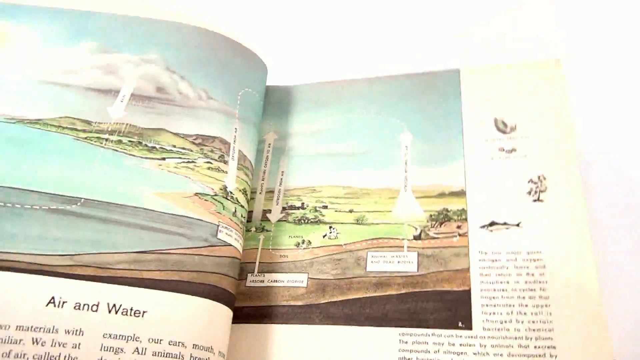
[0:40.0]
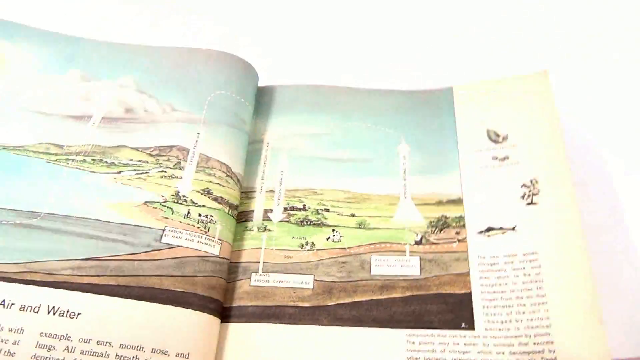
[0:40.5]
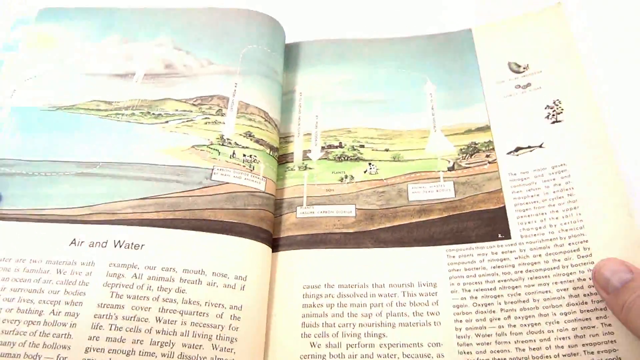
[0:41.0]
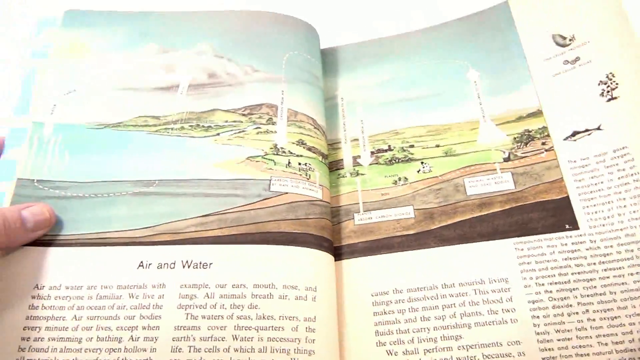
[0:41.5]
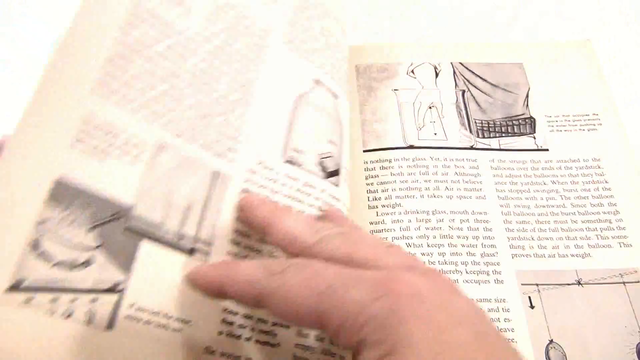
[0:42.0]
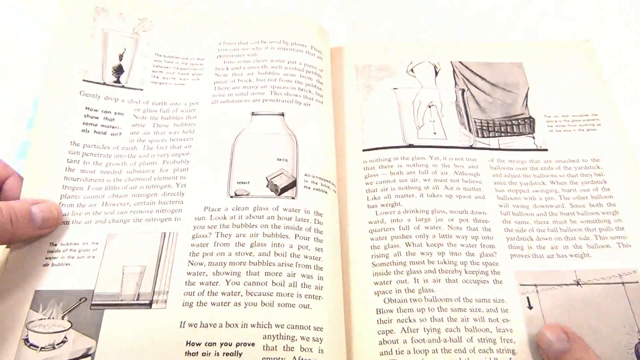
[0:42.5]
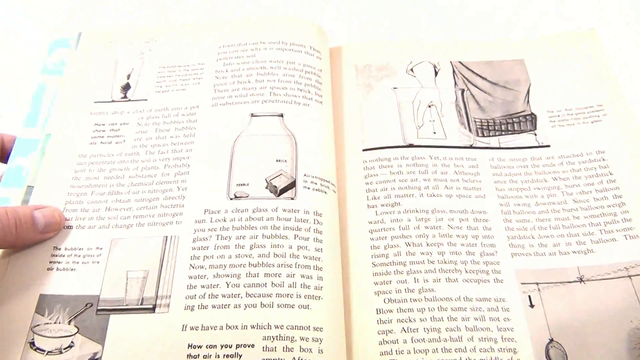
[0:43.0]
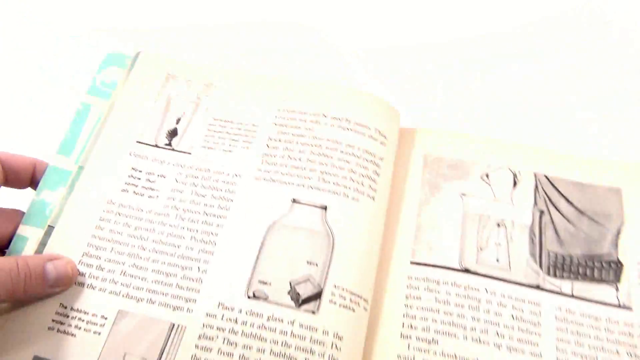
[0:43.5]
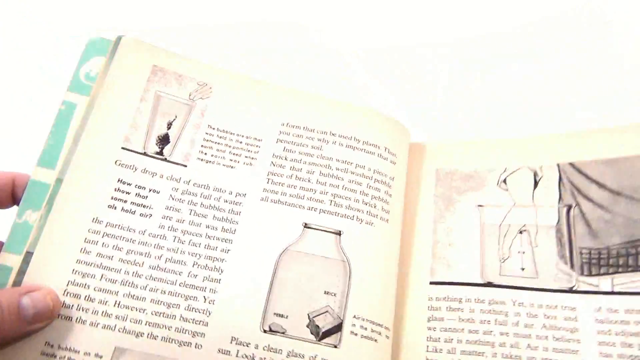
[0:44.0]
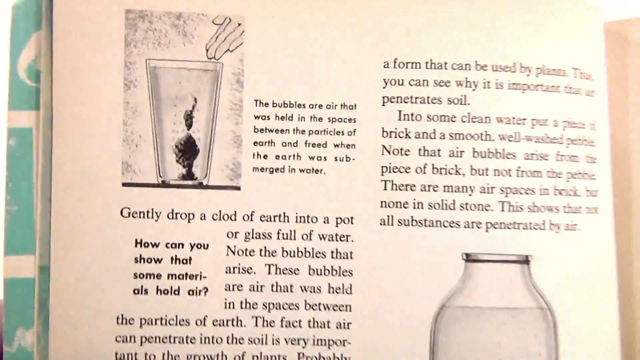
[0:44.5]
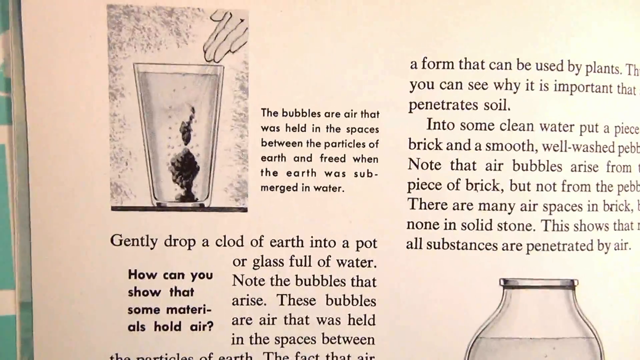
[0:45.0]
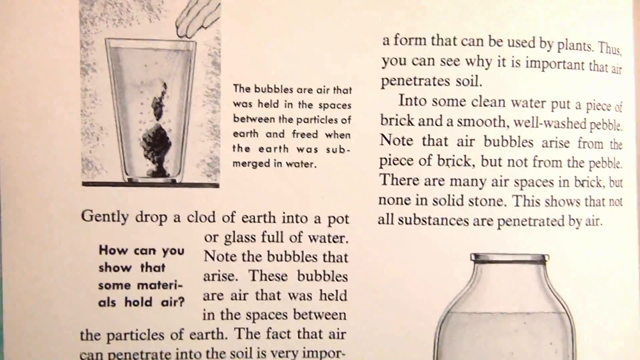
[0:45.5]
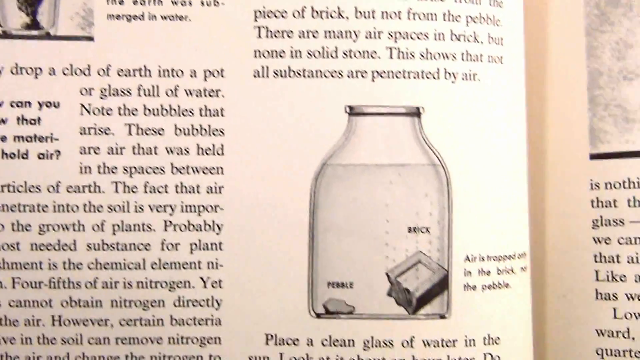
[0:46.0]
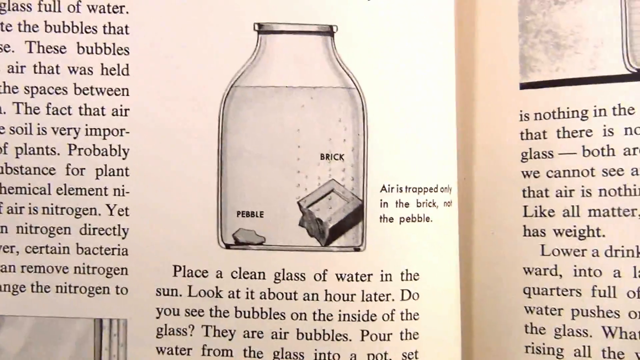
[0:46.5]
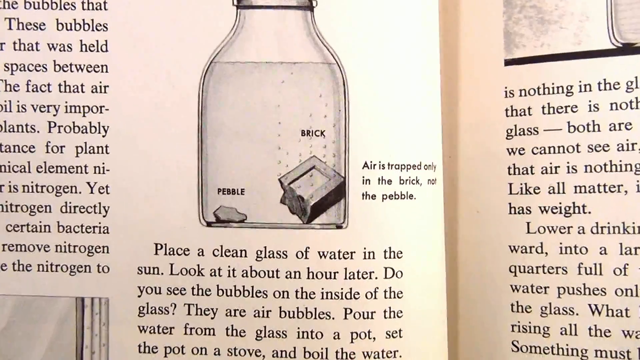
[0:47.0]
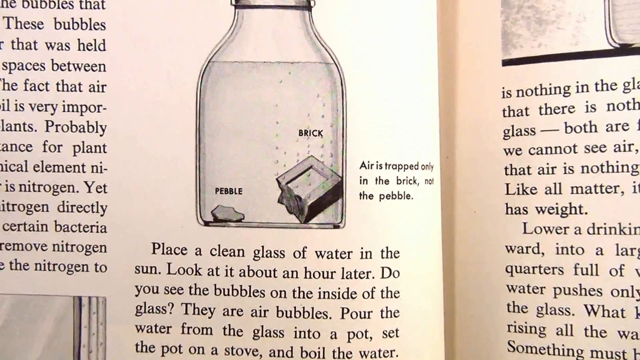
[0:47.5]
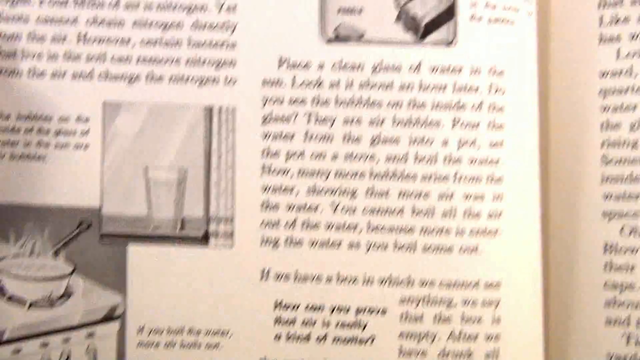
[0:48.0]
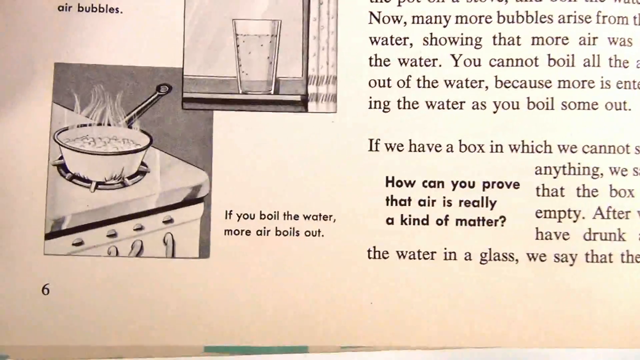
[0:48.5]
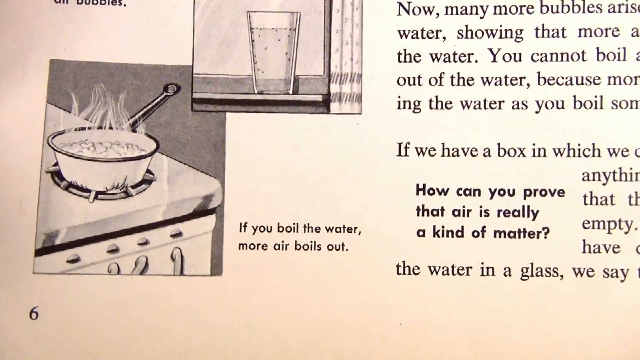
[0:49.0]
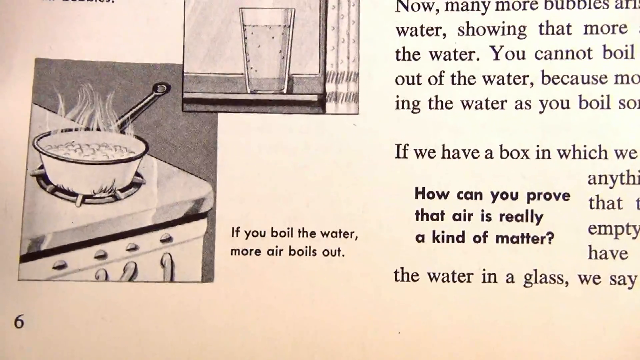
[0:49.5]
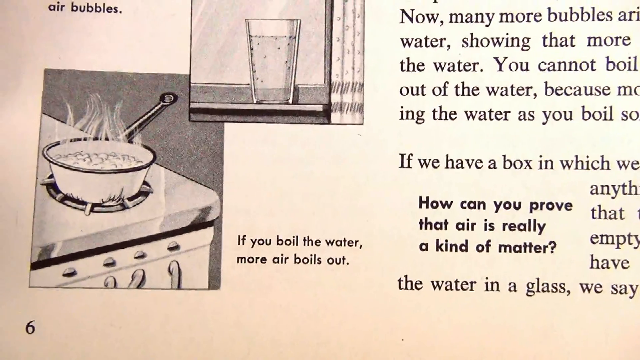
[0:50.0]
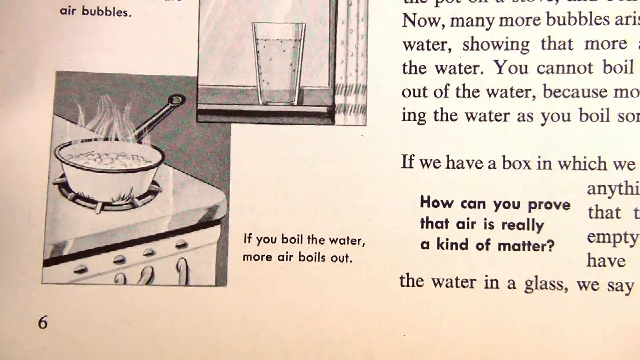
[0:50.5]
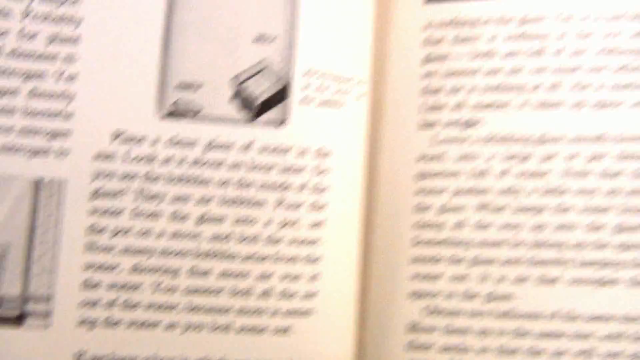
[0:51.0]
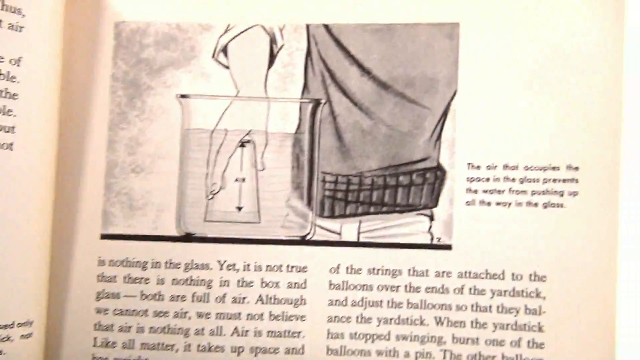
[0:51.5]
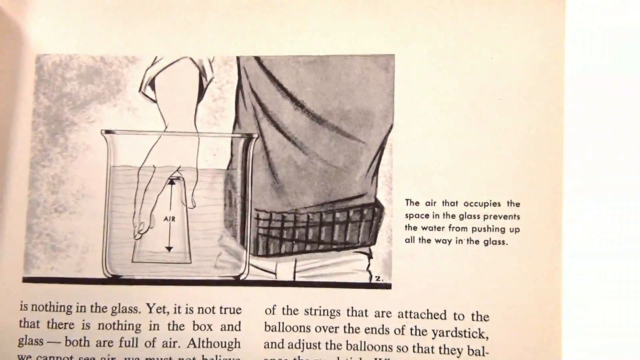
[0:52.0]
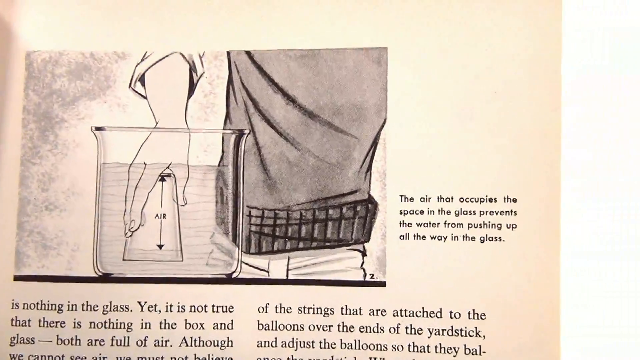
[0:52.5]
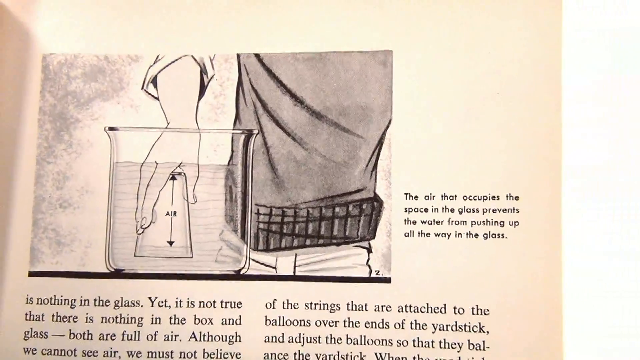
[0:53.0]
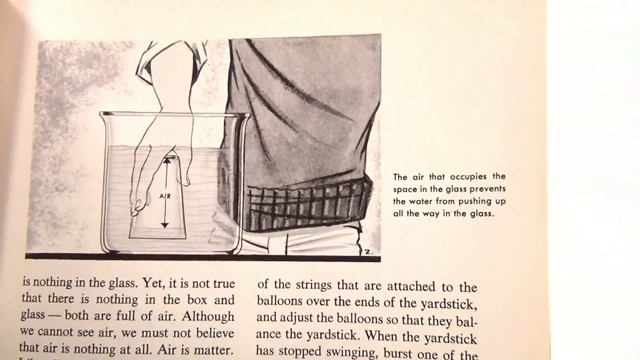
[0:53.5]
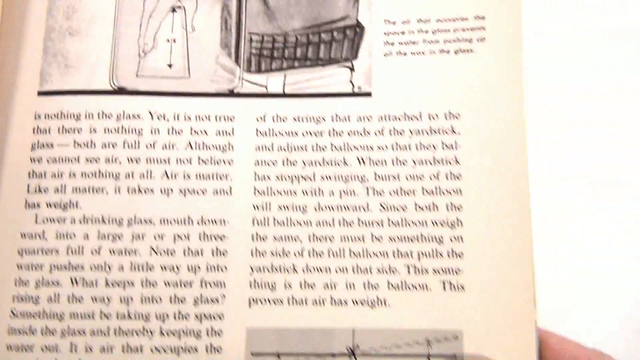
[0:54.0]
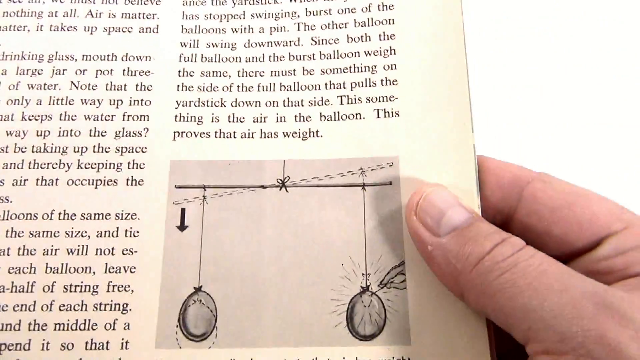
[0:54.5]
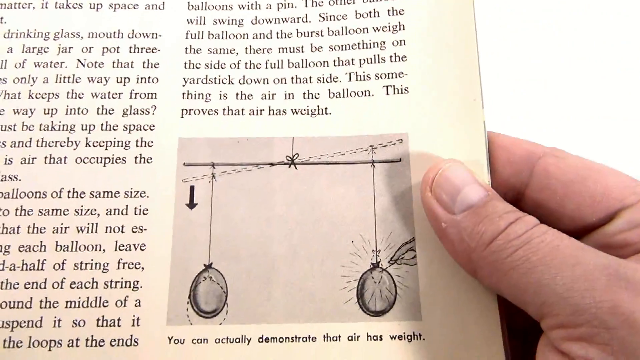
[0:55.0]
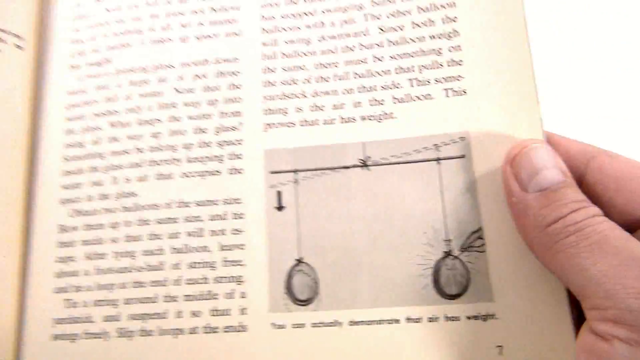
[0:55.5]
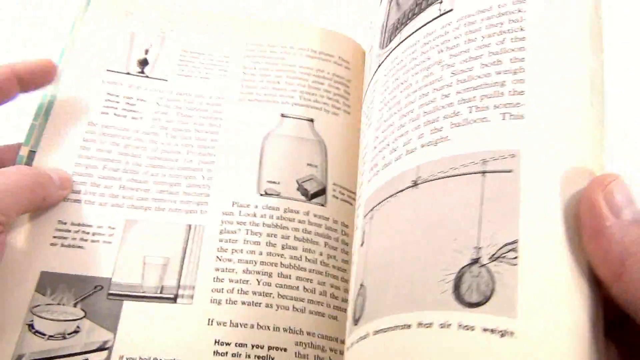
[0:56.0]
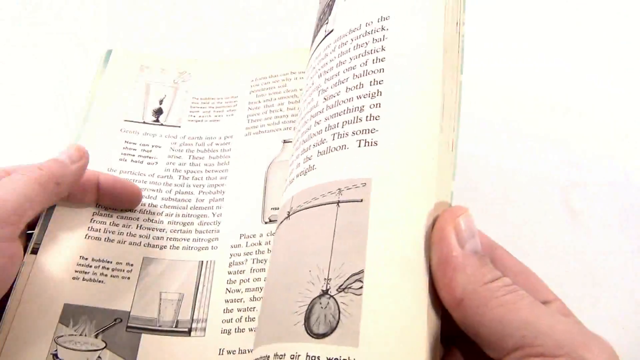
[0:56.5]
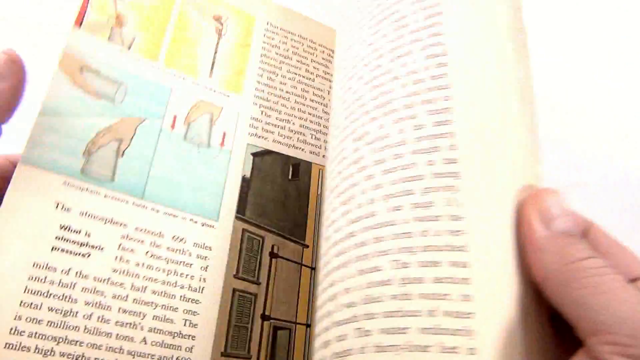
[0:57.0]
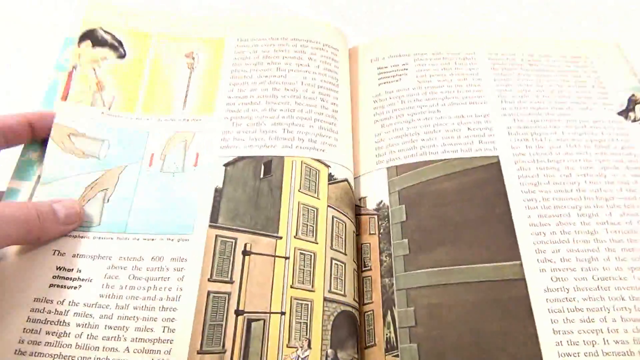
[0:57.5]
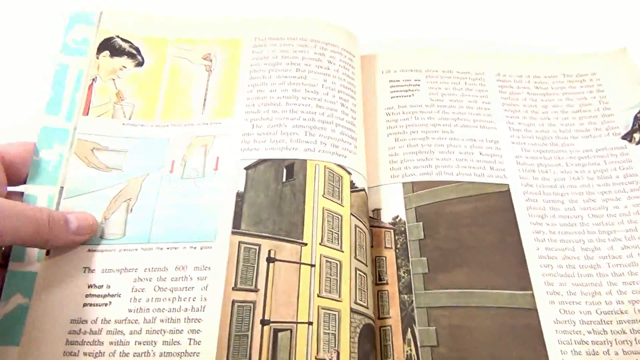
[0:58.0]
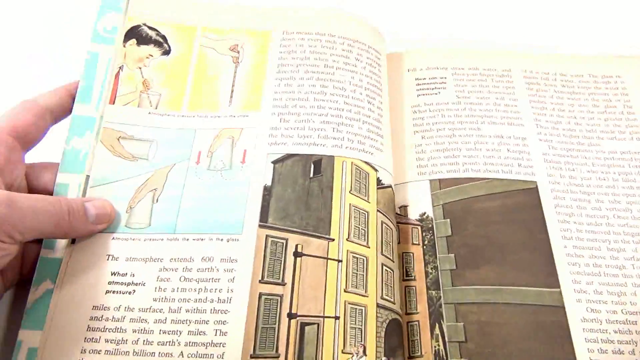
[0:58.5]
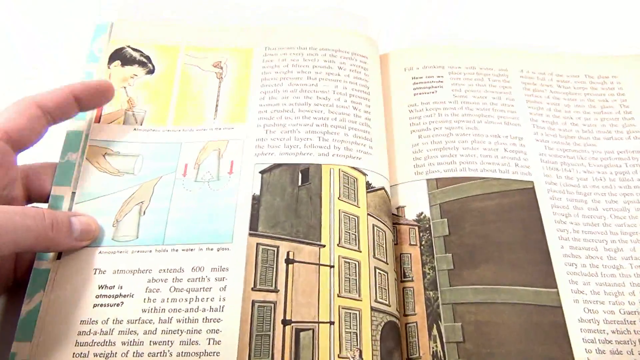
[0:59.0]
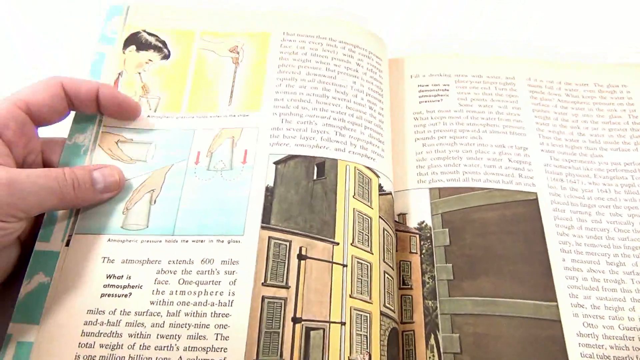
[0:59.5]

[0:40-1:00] The pamphlet is on a page with sky, big clouds and greenery, with possibly some hills or mountains in the background. There is an ocean or body of water on the left page and some form of rock or landmass on the right, part of it green. The pamphlet is open wide and says "air and water". He flips the page to several pictures and zooms in on them: one is of air trapped, showing a boiler on a stove and a cup; then he moves over to a picture of a person dipping water into a canister. He turns to the next page, where a boy with dark hair at the top is messing with some type of water. In the center of the brochure is a building in very bright colors that looks like an apartment building.